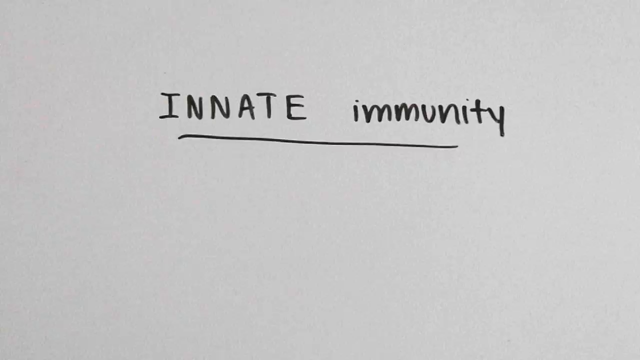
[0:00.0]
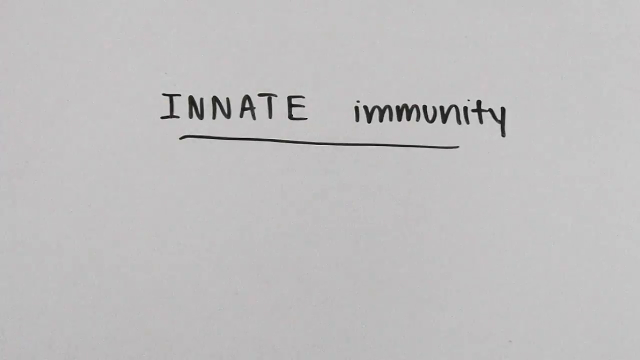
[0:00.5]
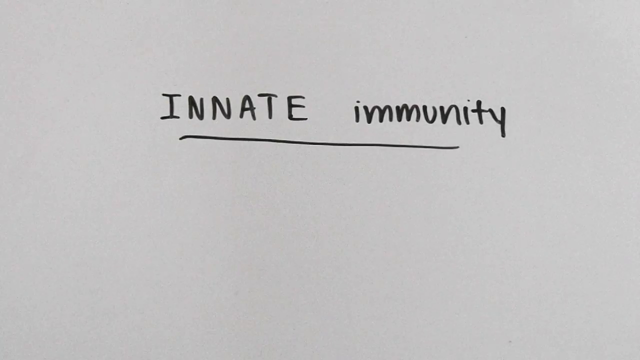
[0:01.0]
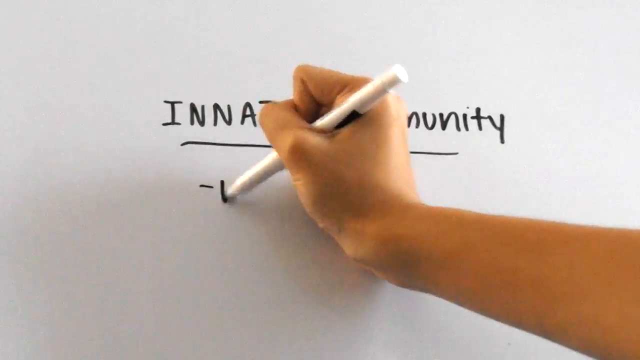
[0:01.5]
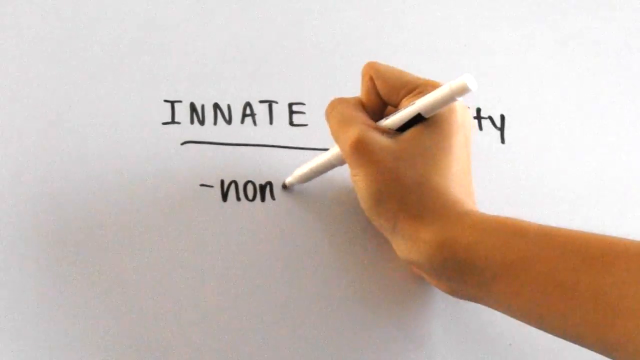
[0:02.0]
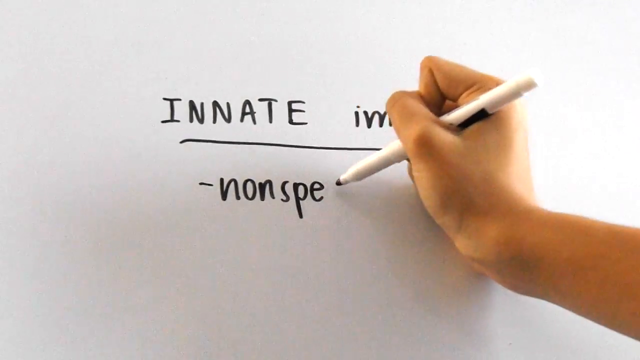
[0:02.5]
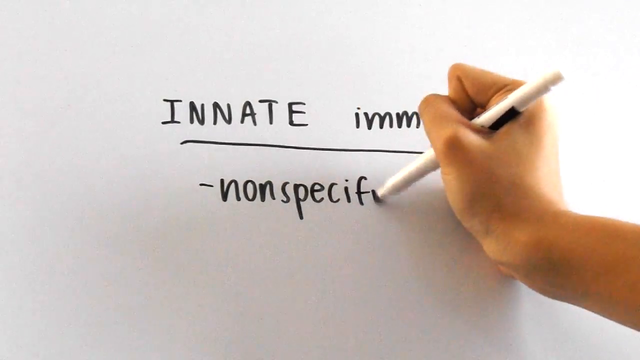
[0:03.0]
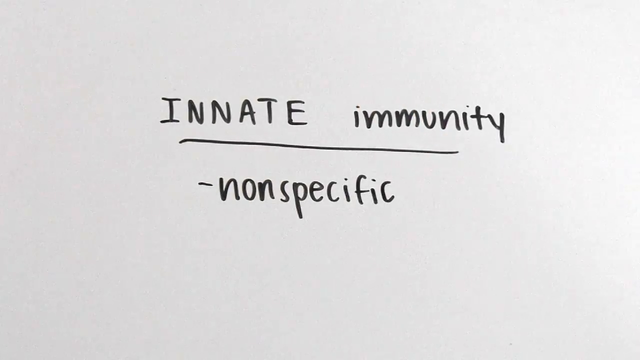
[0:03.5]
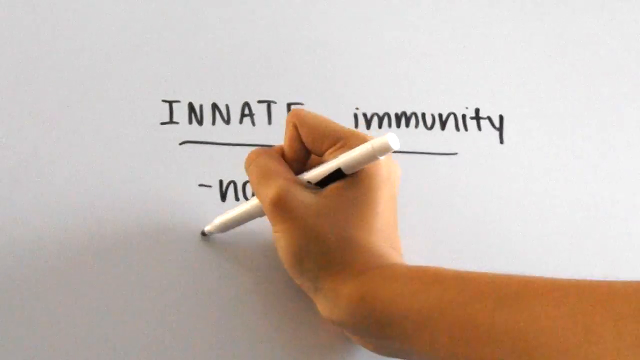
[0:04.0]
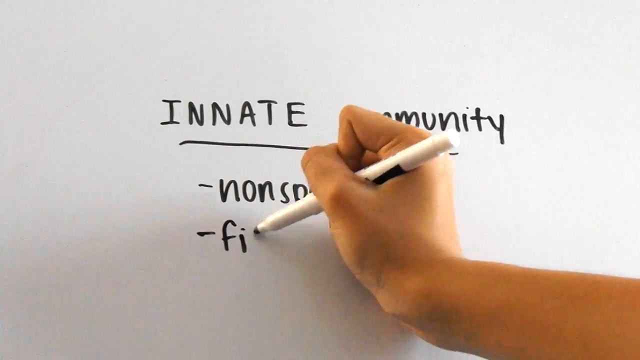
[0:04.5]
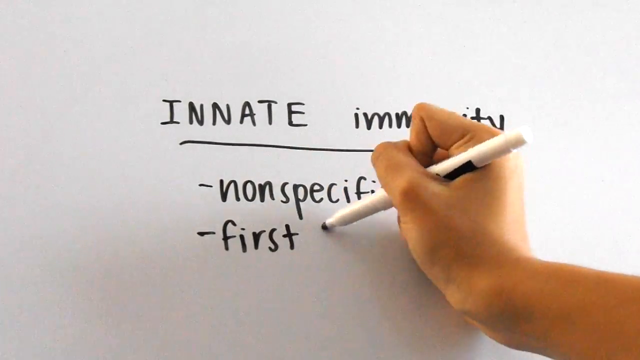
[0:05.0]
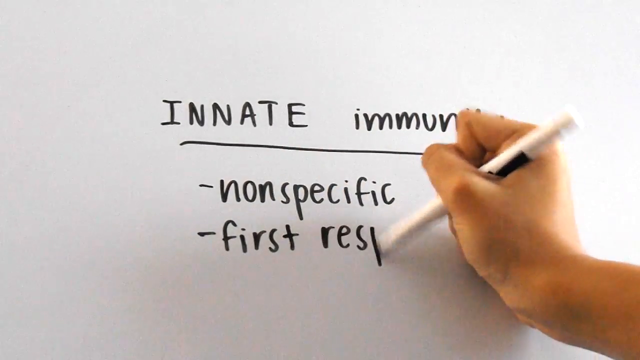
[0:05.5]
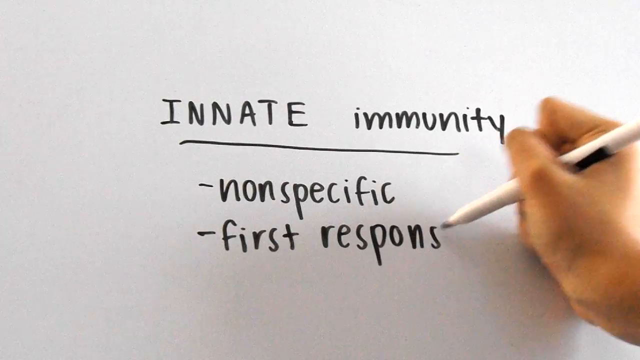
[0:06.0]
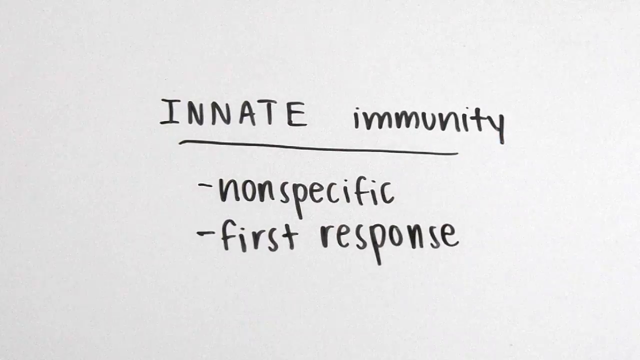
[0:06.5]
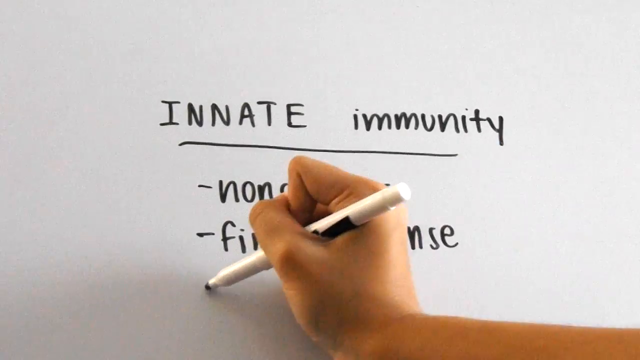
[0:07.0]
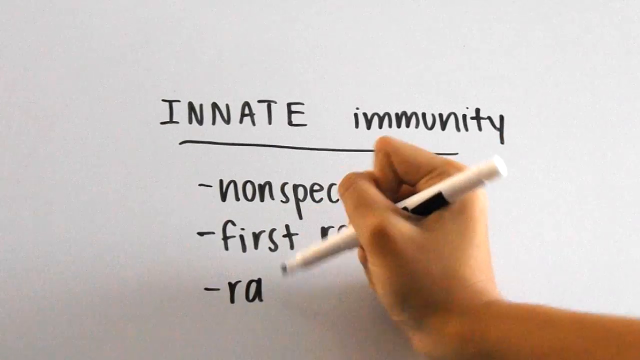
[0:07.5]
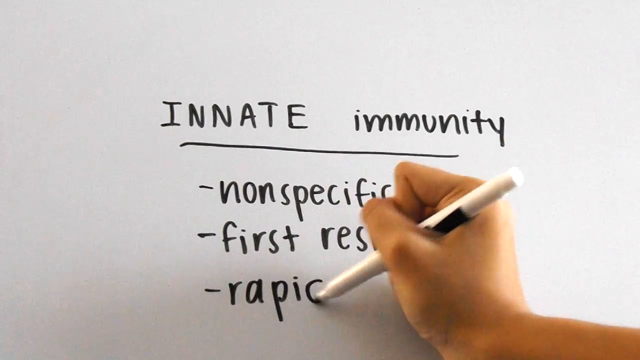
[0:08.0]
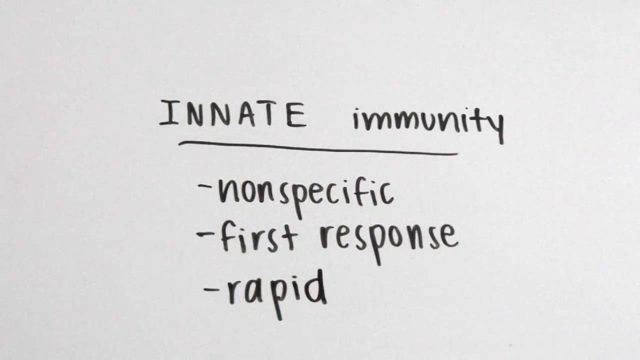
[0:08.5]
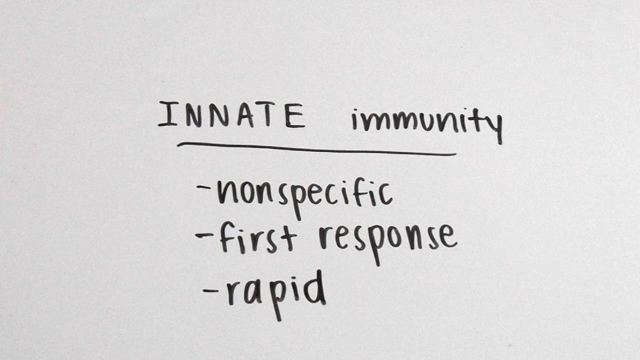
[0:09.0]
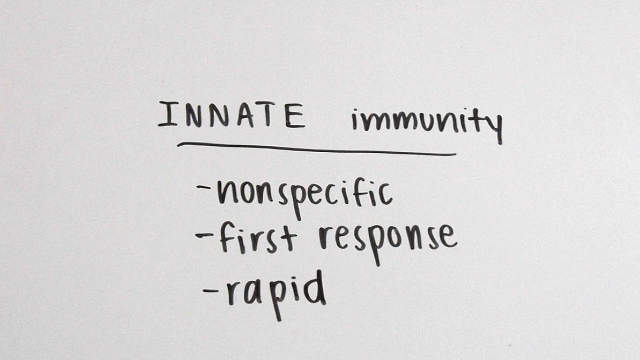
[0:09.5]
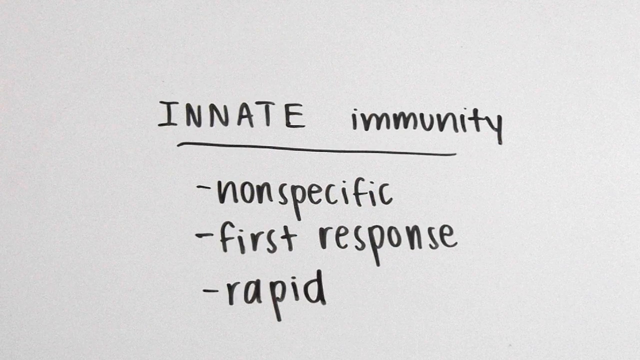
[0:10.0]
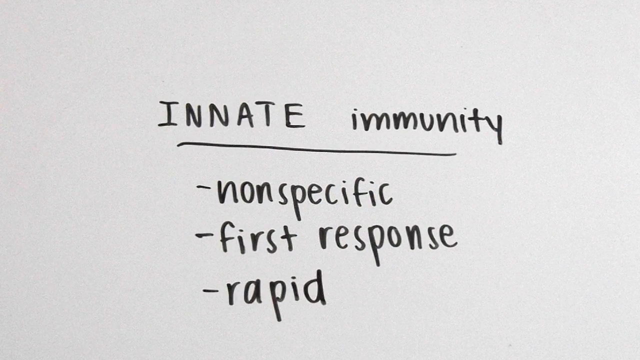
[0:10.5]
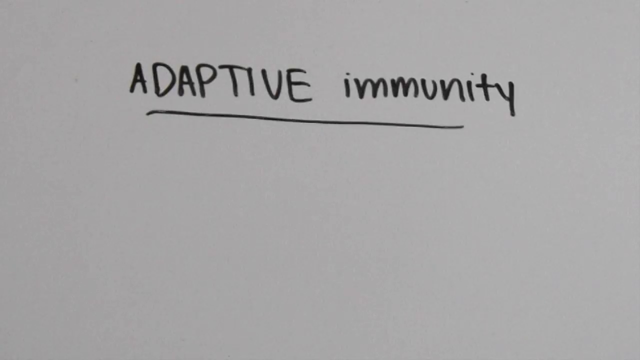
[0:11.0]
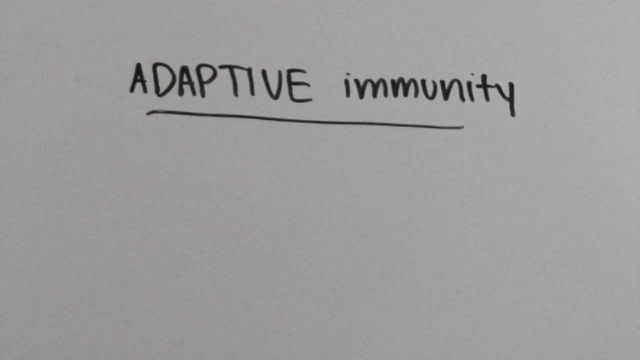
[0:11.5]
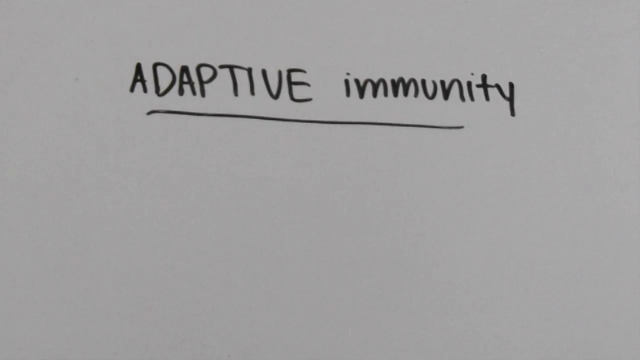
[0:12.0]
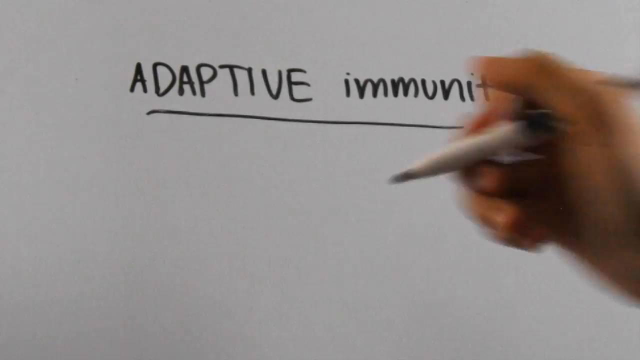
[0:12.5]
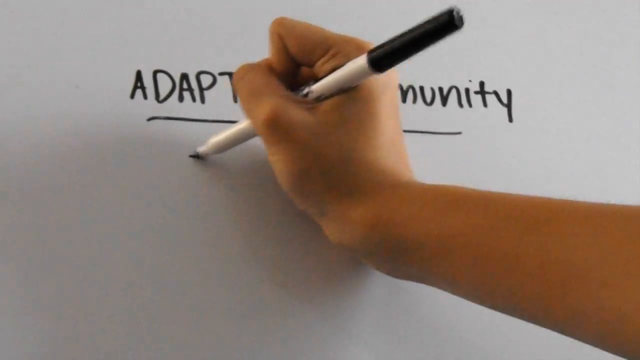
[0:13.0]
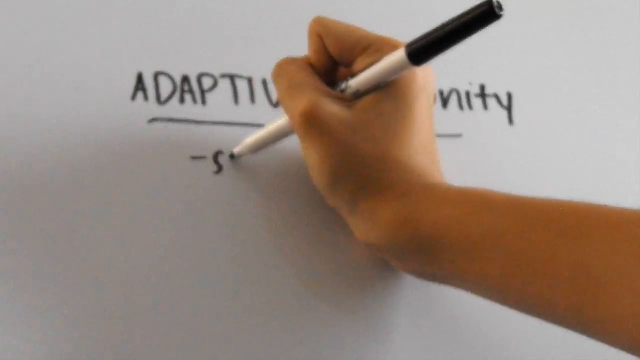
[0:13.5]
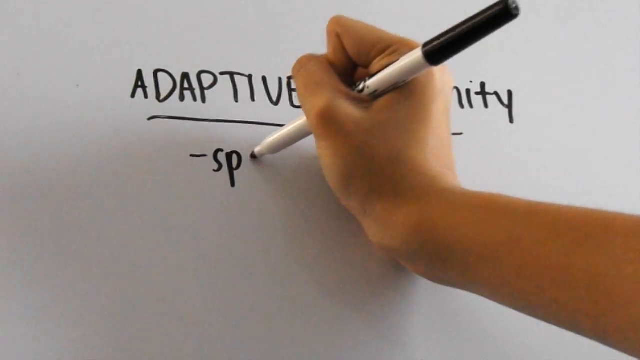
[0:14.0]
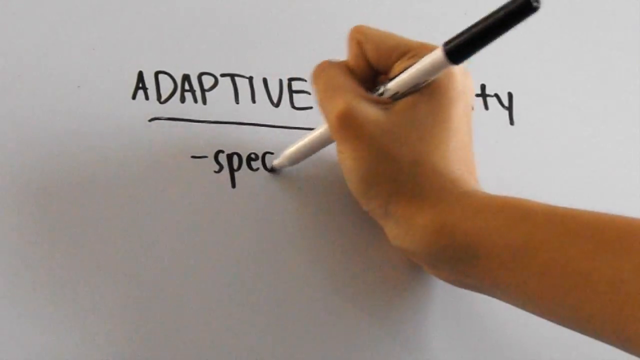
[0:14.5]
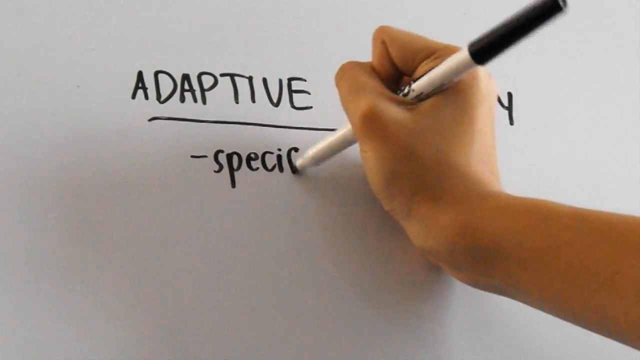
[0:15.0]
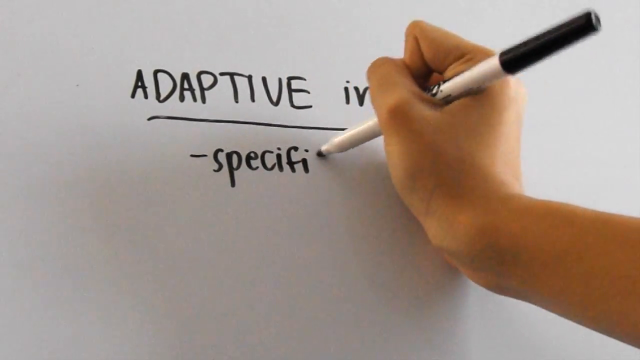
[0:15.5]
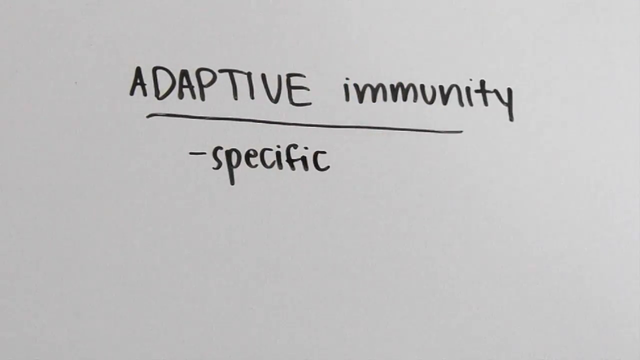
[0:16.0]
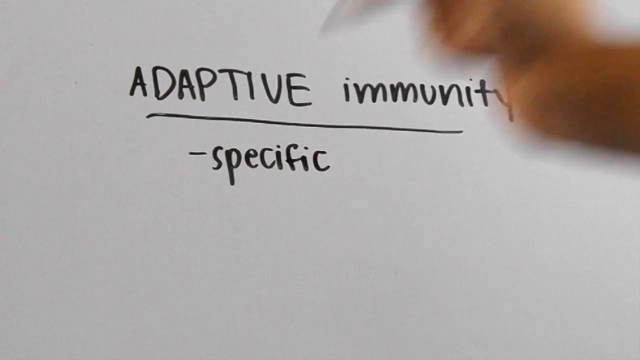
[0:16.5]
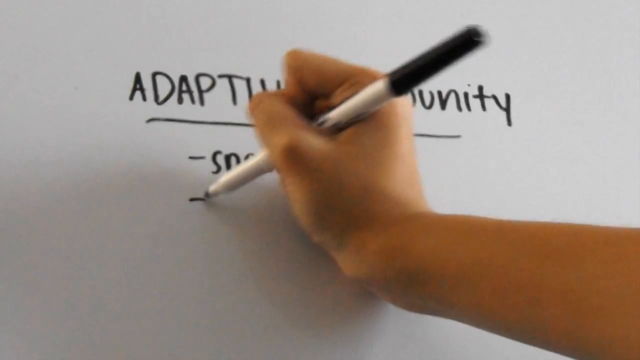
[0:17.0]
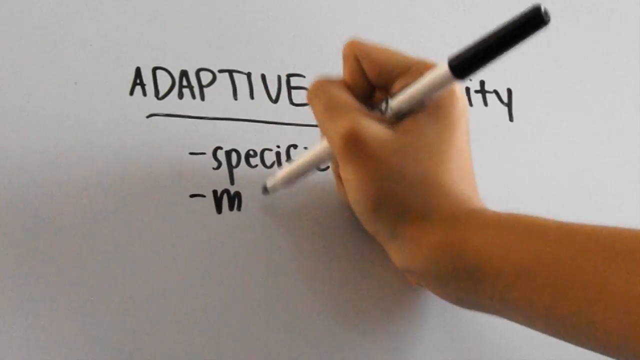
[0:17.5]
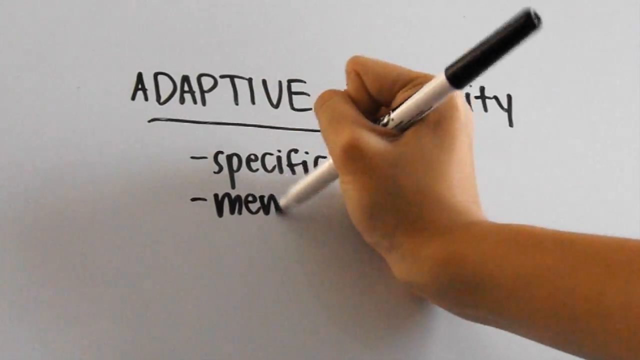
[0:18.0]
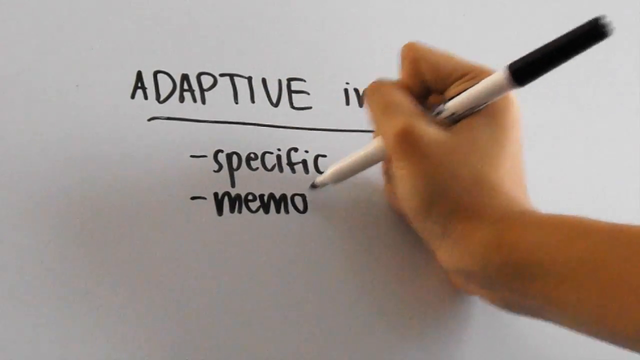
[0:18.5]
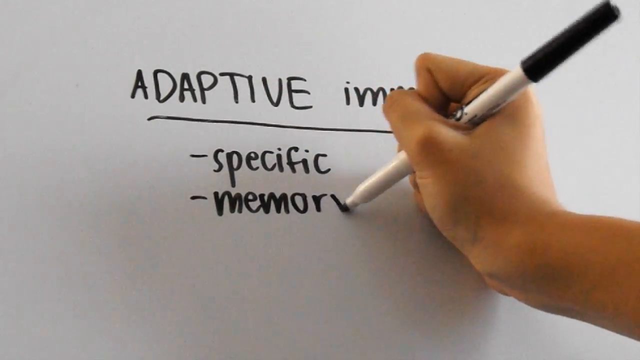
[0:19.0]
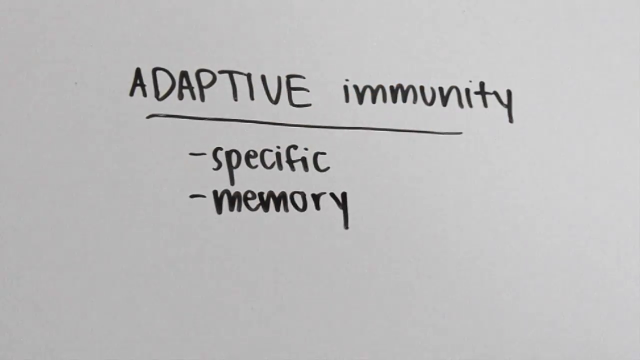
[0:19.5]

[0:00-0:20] A white background looks like it could be either a piece of paper or a whiteboard. Written on the white surface in black, in what looks like handwriting rather than a computer font, is the word "INNATE" in all caps, placed just above the middle horizontally and in the middle vertically, followed by "IMMUNITY" in small caps. A line underneath is slightly skewed toward the bottom left. A hand with a tanned skin color appears, holding a white marker with a white body and a black tip, writing in black. The person holds the pen oddly: it rests in the hollow between the index finger and thumb, with the thumb folded over the tip of the index finger, so the pen is held sort of in a fist while writing. The person writes a dash and the word "NON-SPECIFIC", then another dash underneath and the word "FIRST-RESPONSE", then another dash and the word "RAPID".